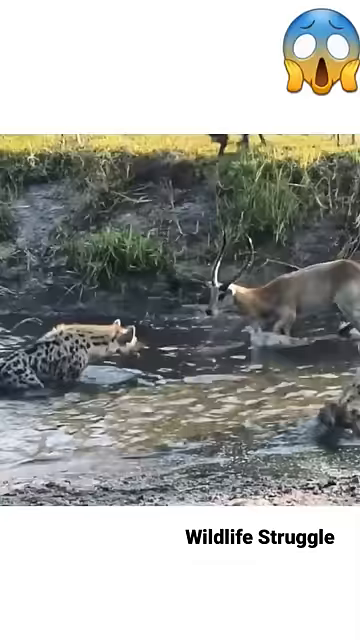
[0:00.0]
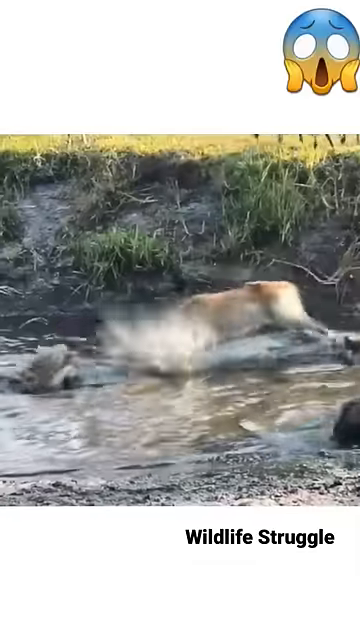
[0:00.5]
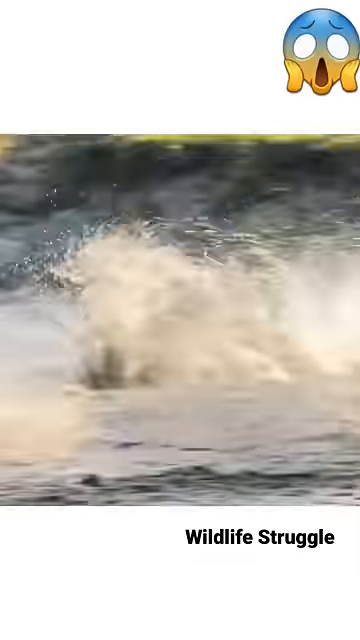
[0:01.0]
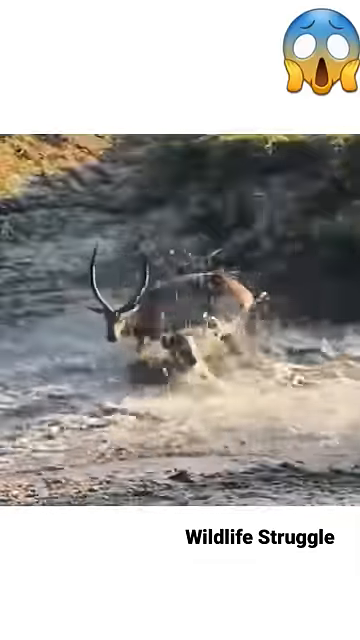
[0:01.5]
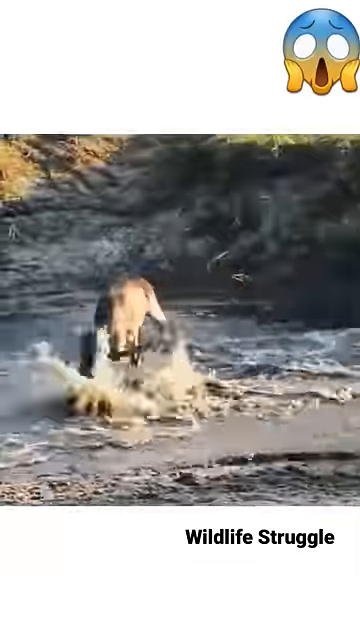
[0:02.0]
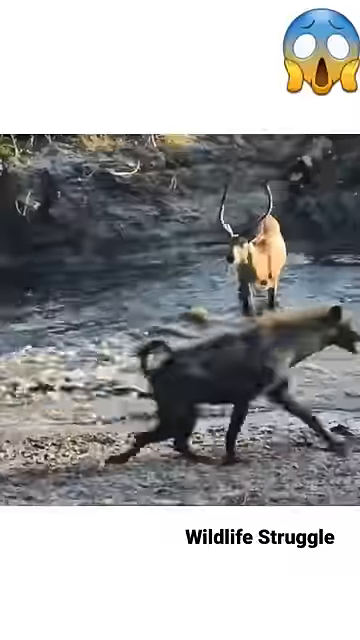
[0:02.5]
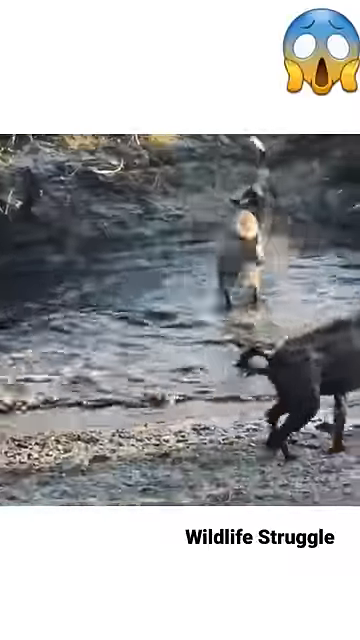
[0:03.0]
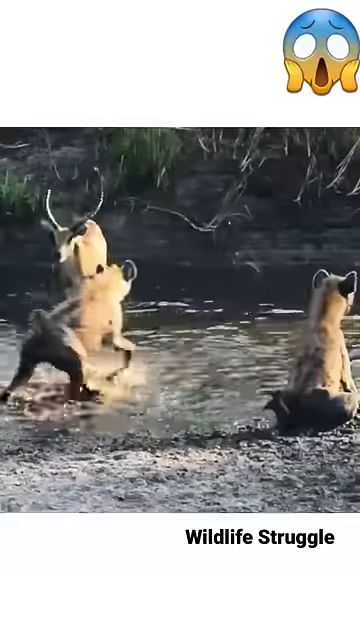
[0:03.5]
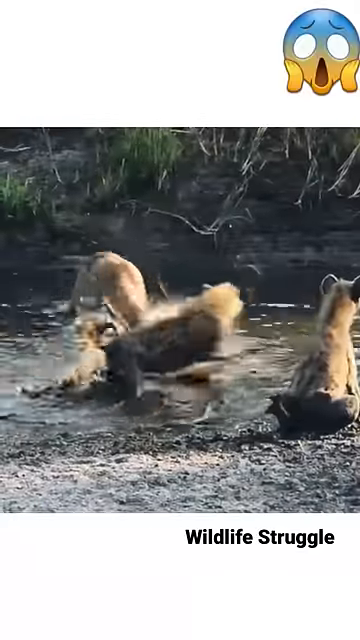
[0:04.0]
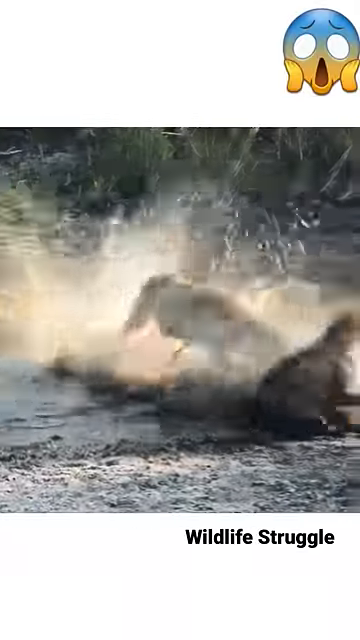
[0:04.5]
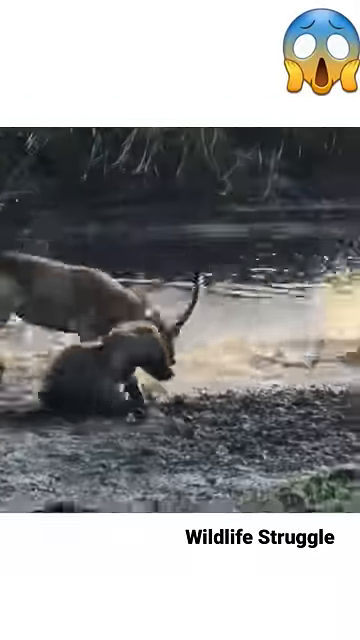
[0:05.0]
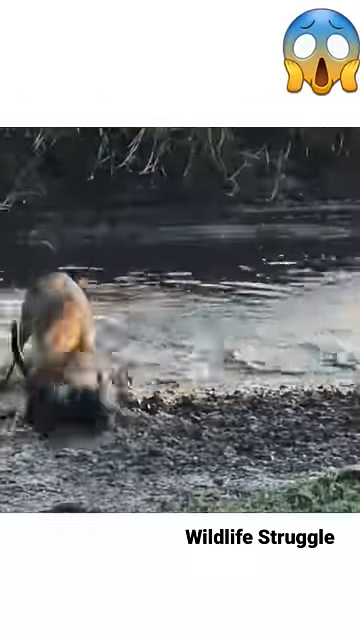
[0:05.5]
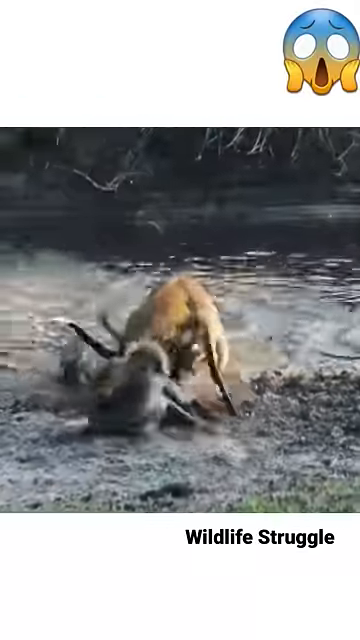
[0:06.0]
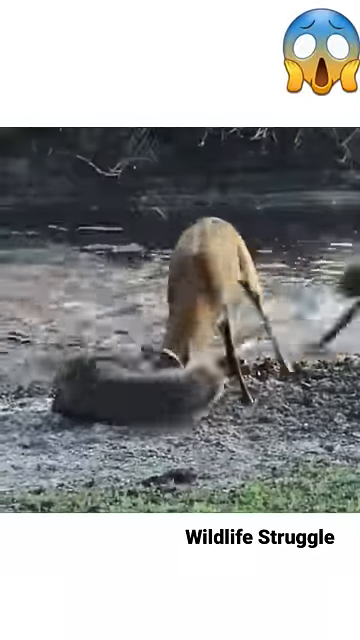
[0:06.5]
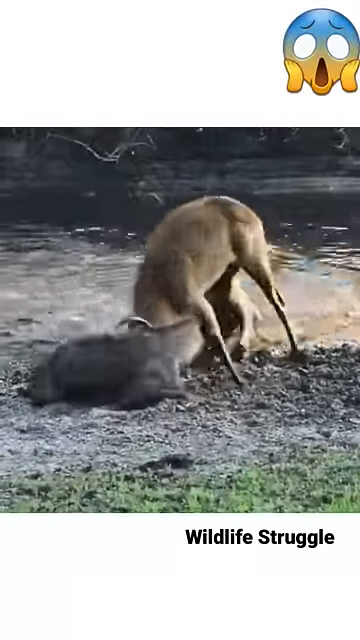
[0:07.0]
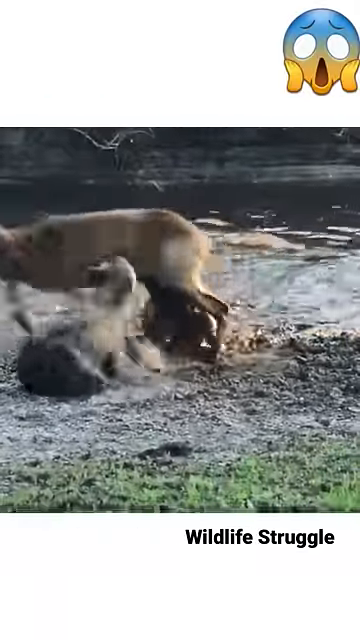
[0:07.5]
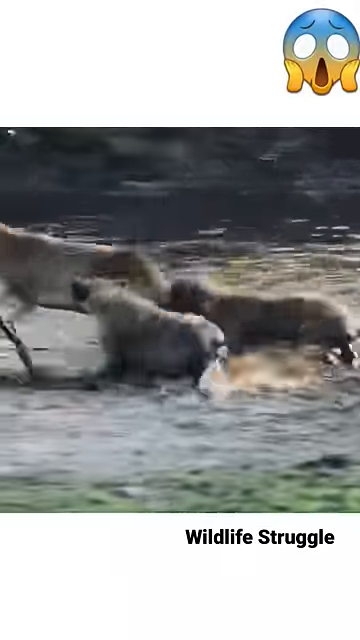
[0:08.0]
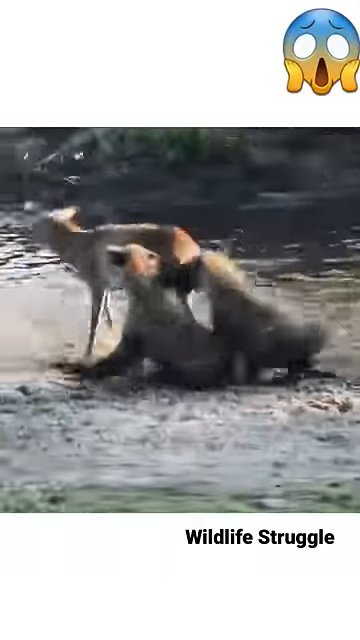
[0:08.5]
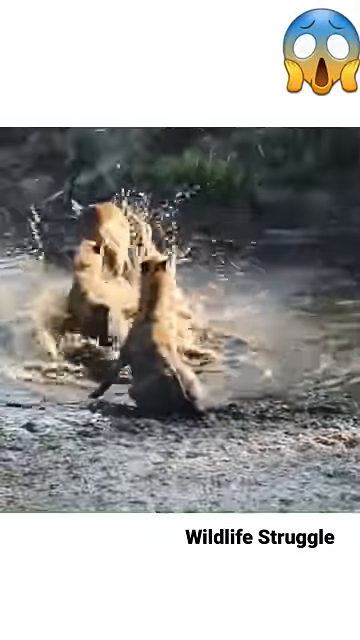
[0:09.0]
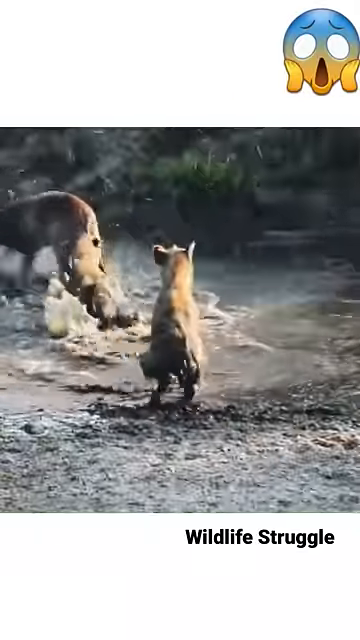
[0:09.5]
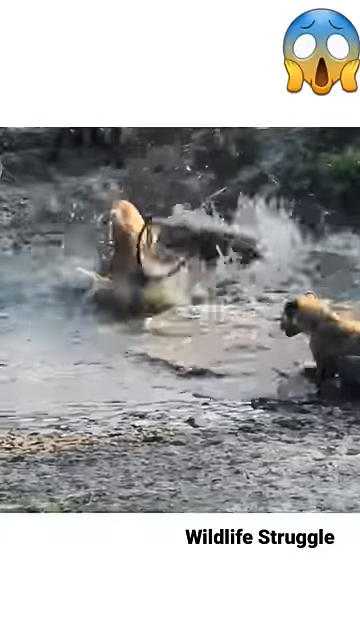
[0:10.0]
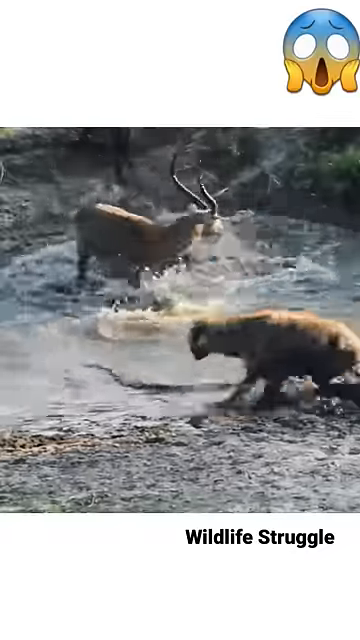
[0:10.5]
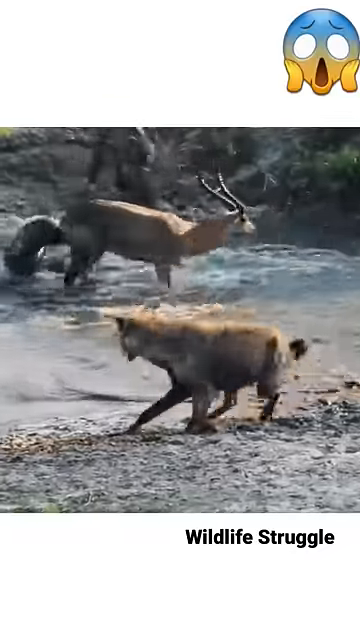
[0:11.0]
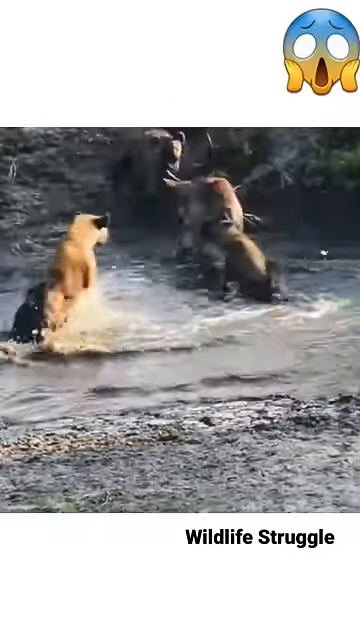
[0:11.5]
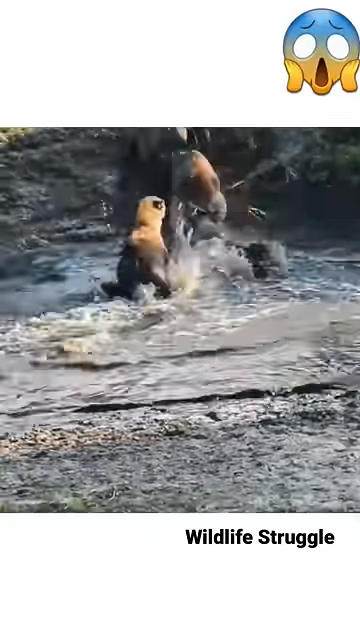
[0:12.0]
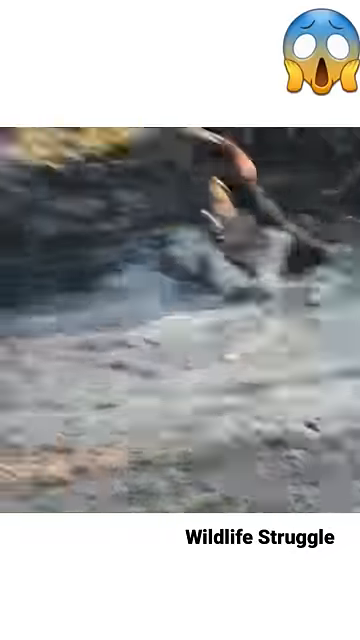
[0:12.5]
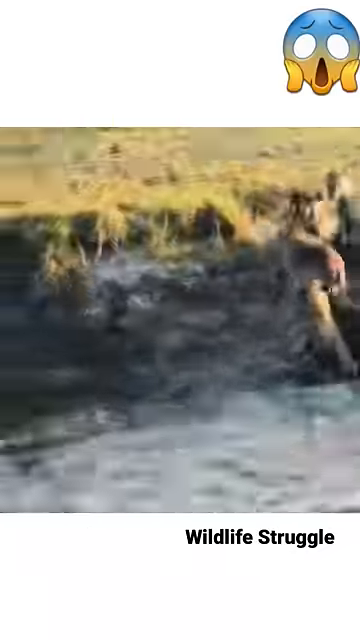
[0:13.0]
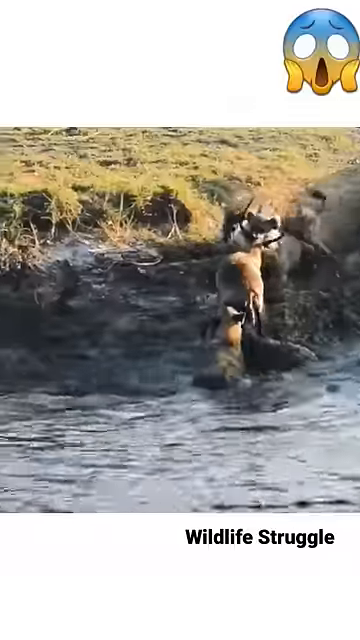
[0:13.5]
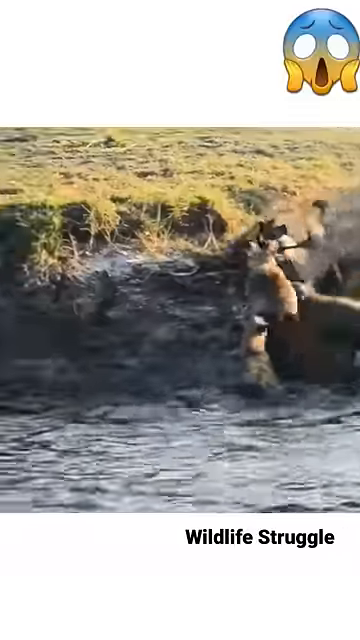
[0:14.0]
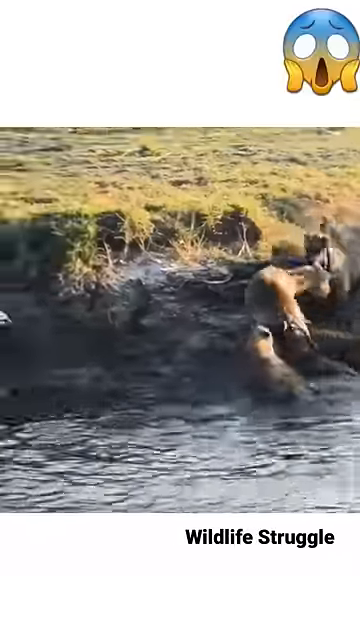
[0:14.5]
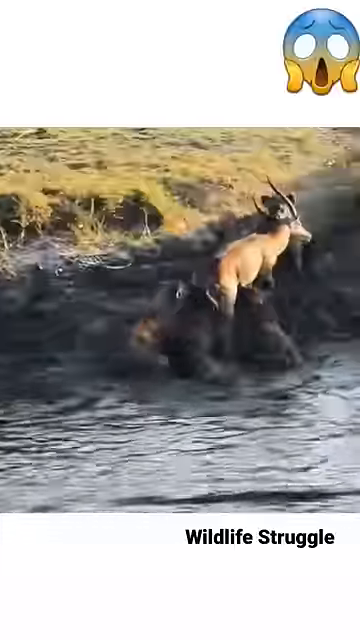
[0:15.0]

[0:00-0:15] In a nature scene, an antelope in a river is attacked by hyenas. At first the antelope fights off the hyenas by ramming them with its horns, but other hyenas join in, biting the antelope on its rear quarters and starting to overwhelm it as it tries to escape up the riverbank. The setting appears to be a prairie, with some grass in the background and sort of muddy water in the stream.